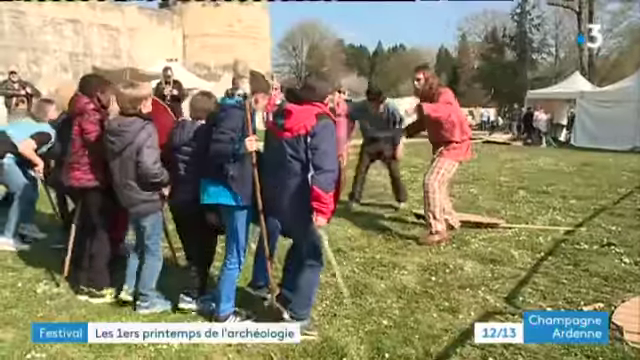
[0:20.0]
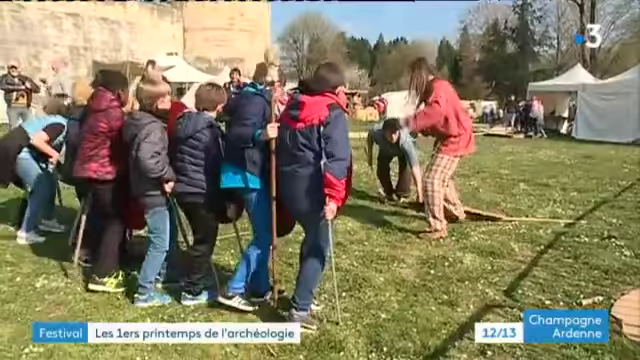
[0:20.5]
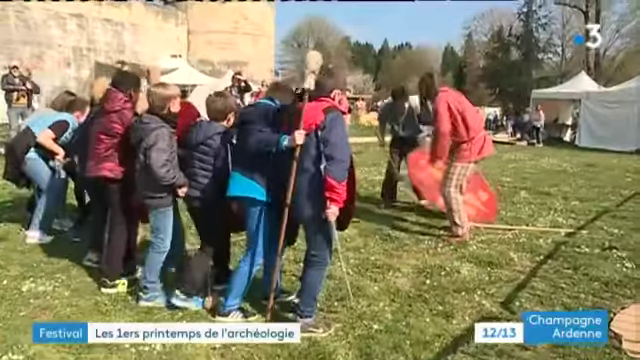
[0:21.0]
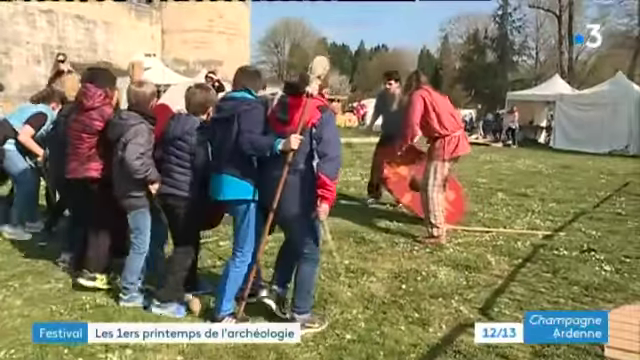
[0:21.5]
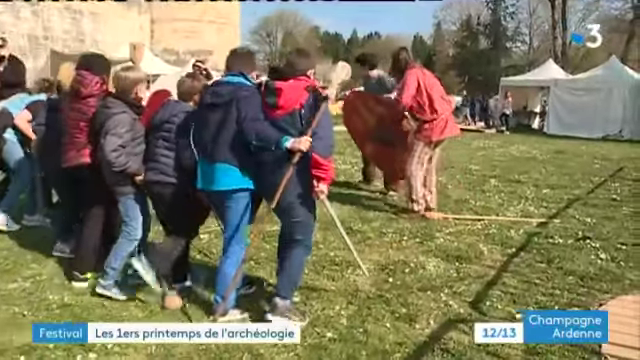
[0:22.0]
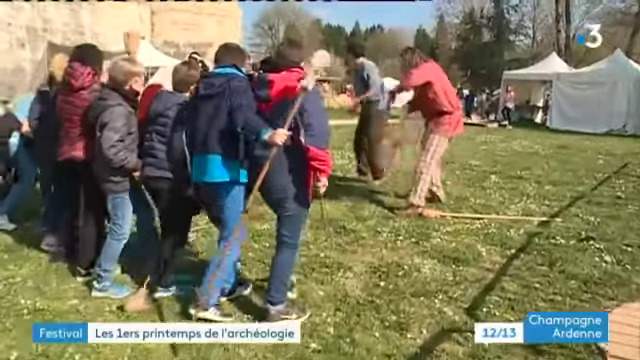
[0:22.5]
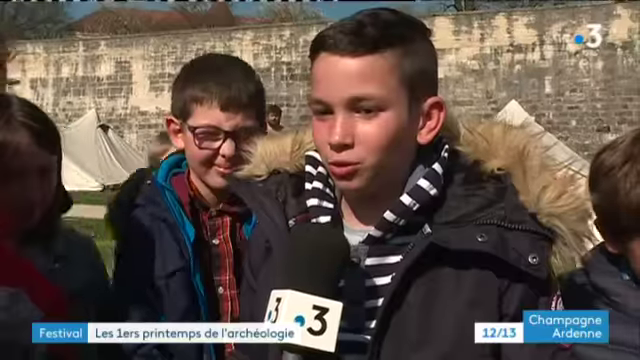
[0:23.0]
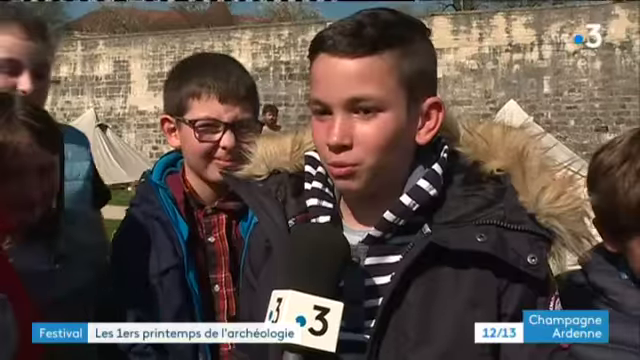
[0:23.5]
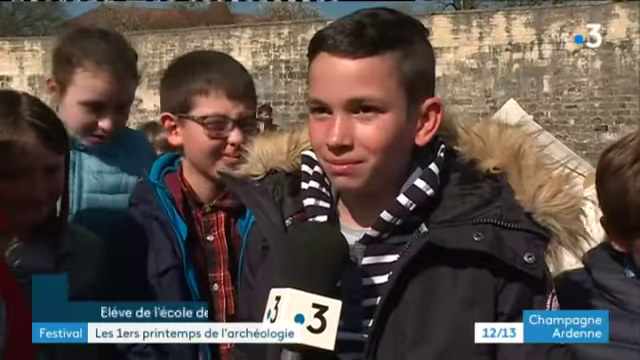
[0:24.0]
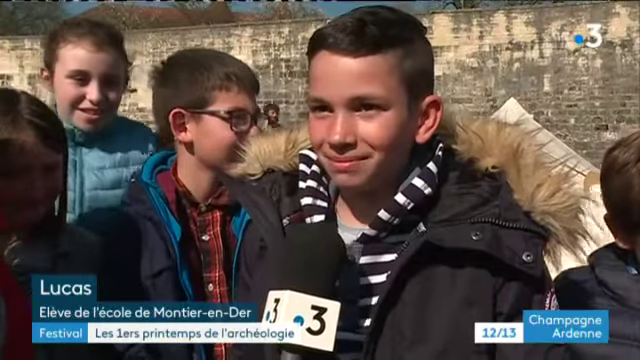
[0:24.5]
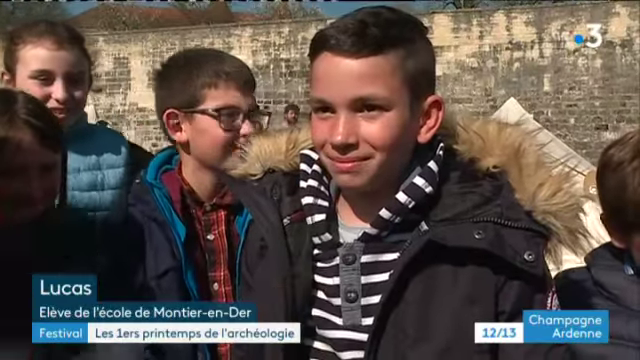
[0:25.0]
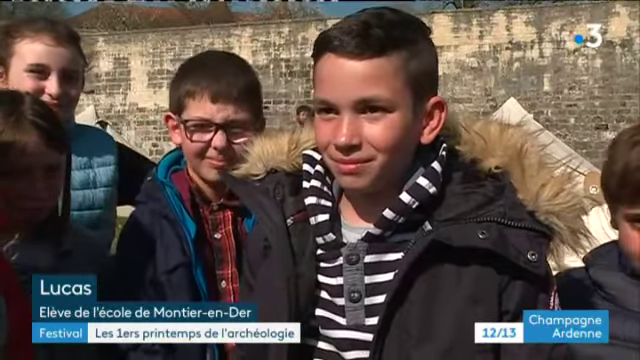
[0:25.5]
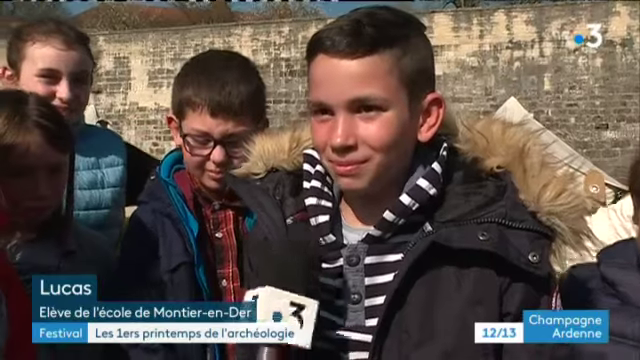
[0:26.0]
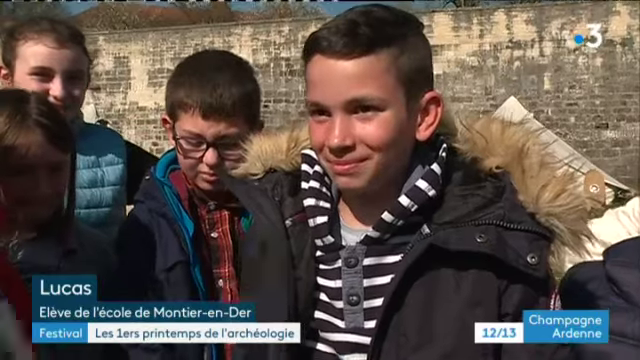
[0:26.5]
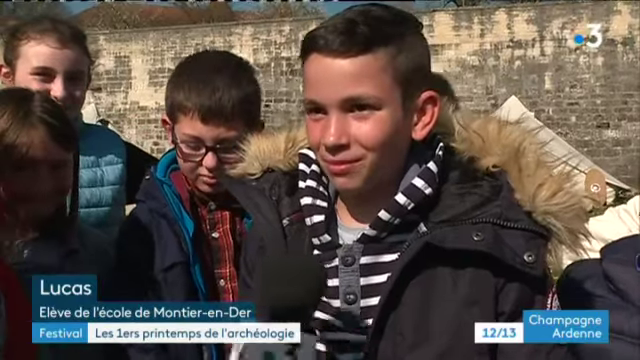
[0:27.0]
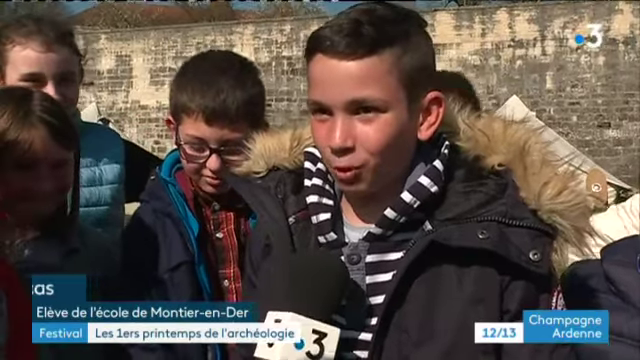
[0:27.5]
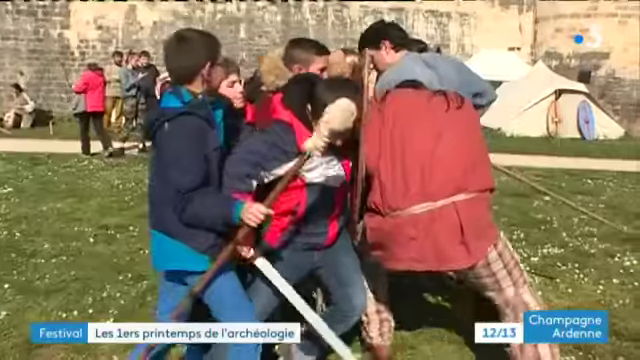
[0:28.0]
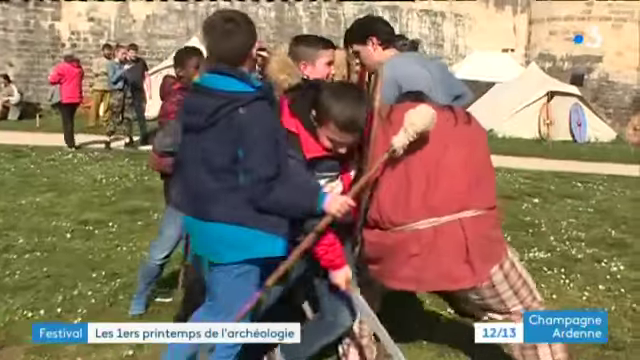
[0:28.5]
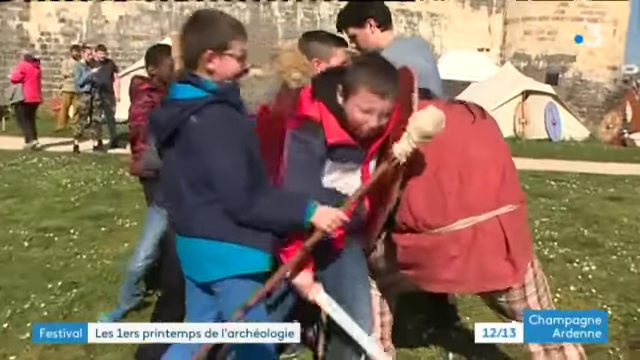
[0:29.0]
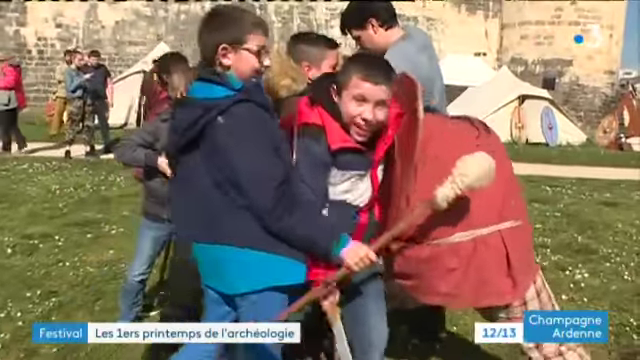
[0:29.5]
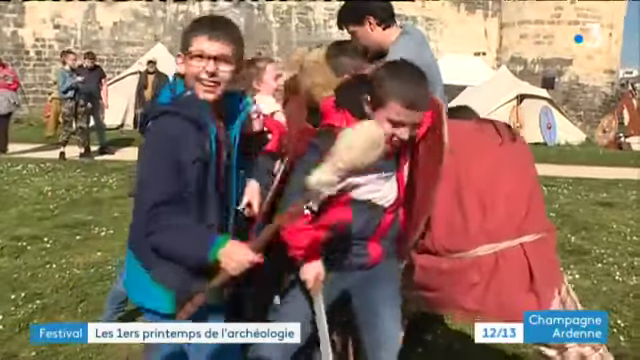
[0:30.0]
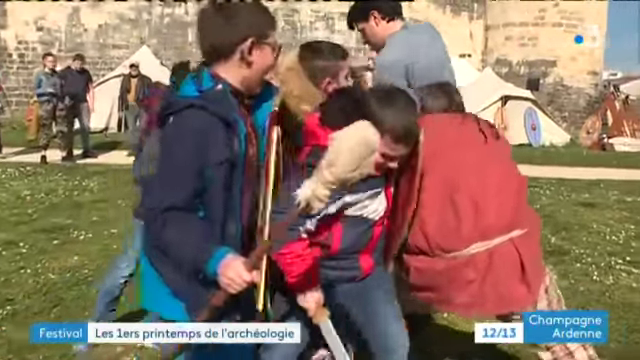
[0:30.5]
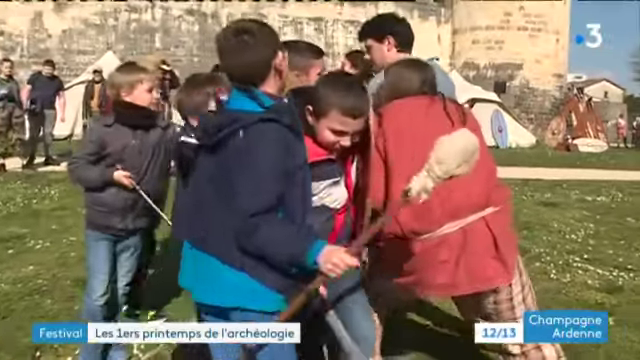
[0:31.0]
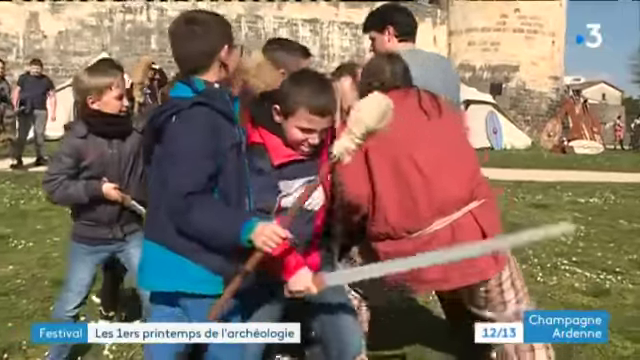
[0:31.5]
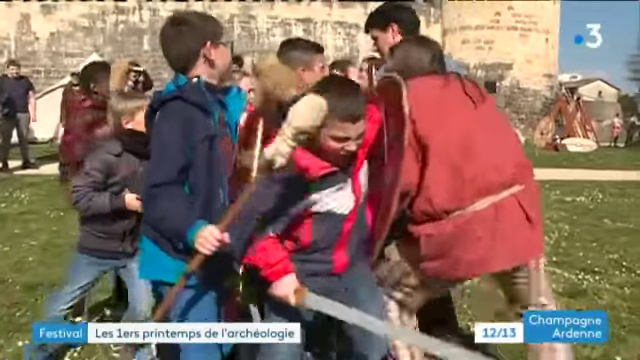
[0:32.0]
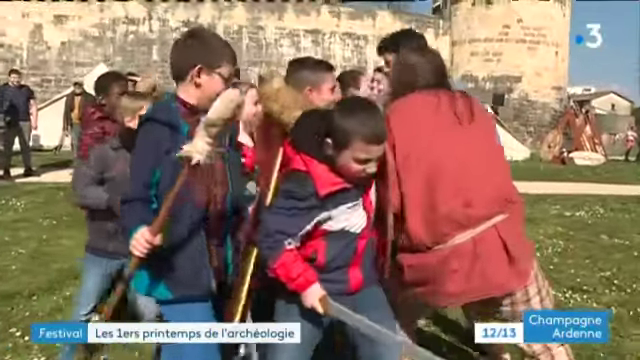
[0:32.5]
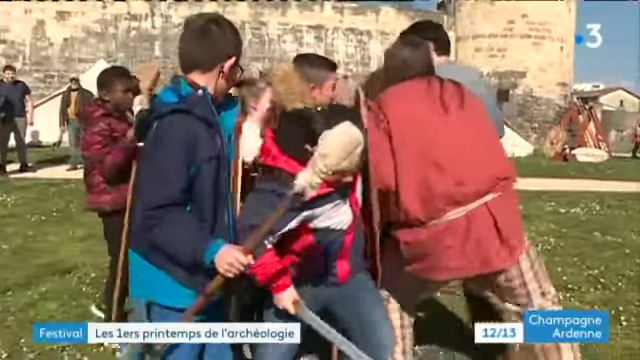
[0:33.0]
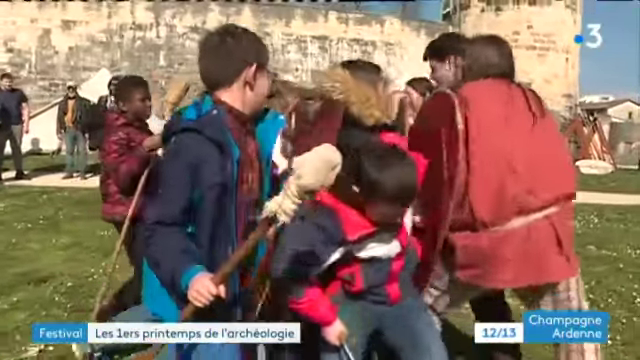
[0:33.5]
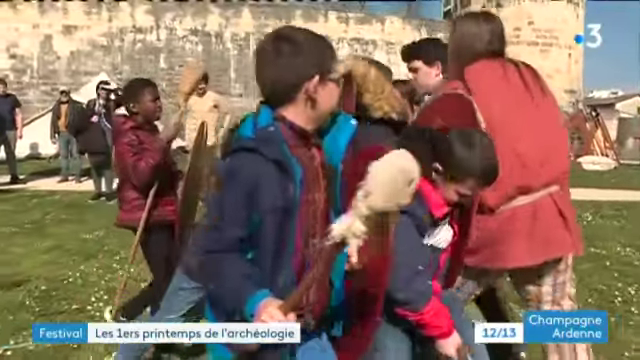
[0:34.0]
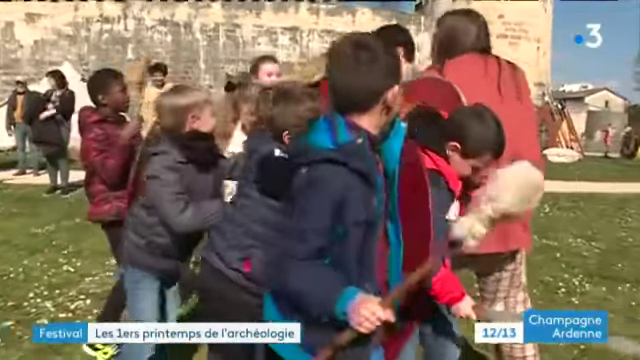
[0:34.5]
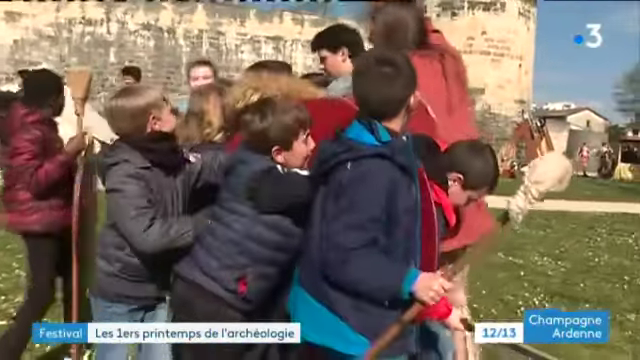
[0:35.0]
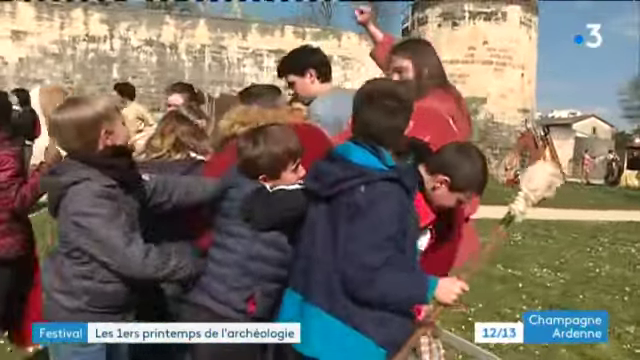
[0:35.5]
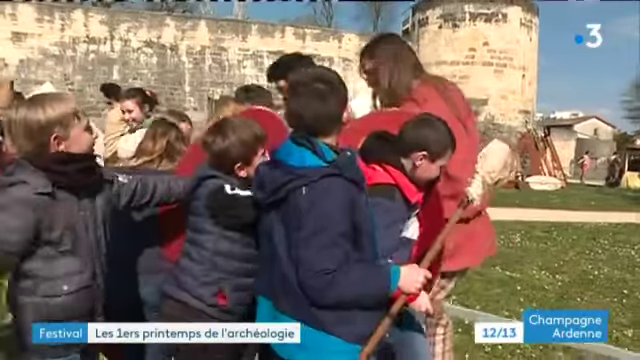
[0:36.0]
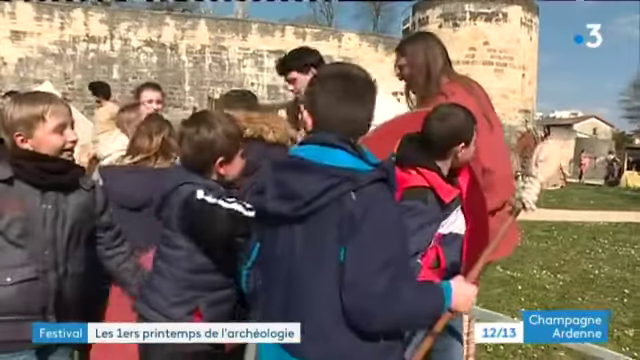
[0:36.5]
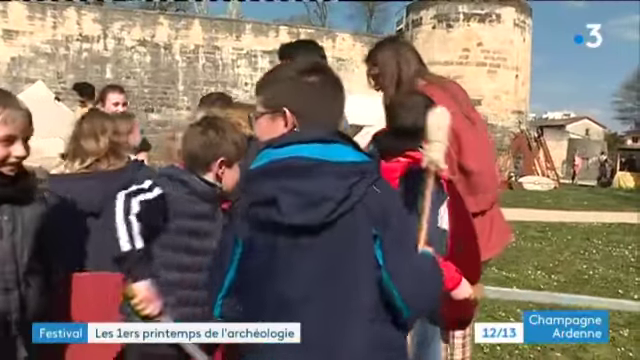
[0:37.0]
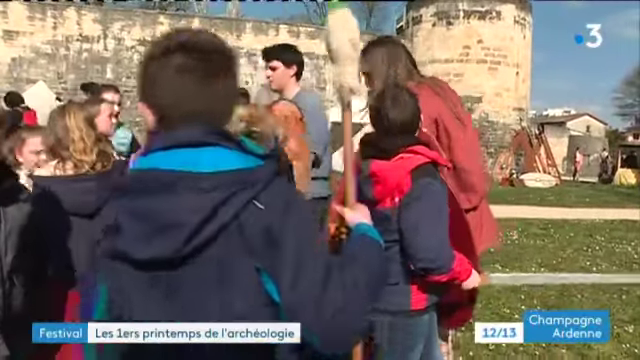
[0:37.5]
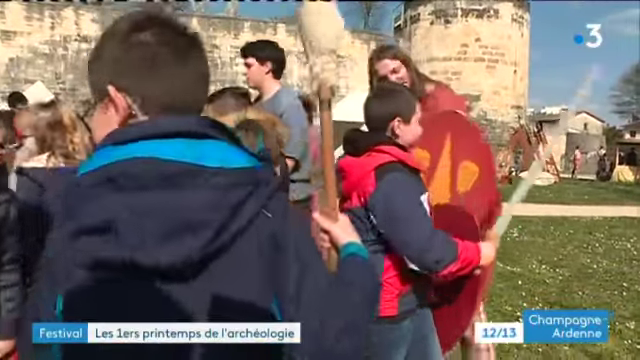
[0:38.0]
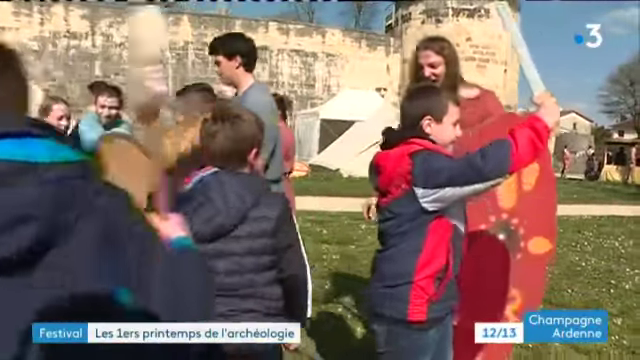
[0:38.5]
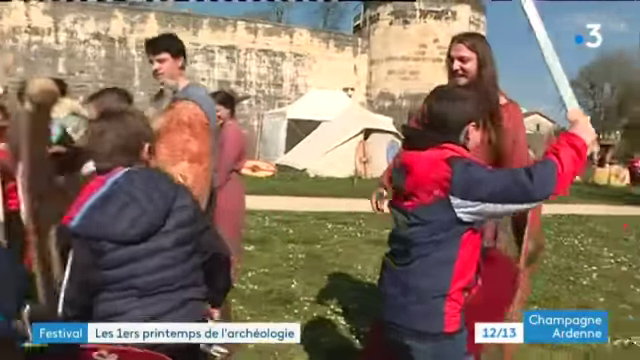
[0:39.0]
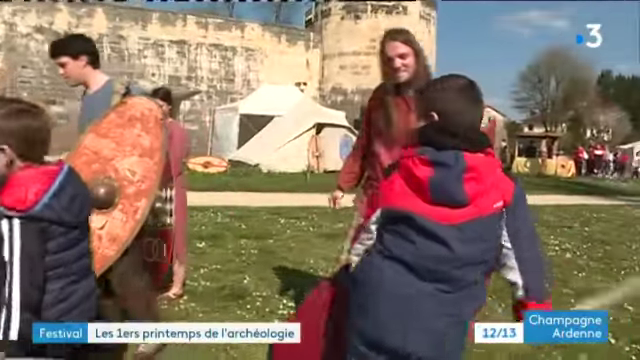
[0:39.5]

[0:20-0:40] The historical reenactment of a military engagement continues. On the left of the screen is part of a medieval castle with a round turret; on the right, in the background, are trees and a white marquee. In the foreground, the camera hovers behind a group of children dressed in jackets and holding spears and shields, showing the backs of their heads. In front of them, two men pretend to attack them with spears and large shields. The children stand in a row, and the row advances towards the two men, threatening them with spears. In the next shot, five children stand side by side in front of an old stone wall. One boy is at the front, wearing a black jacket with a fur hood and a black and white striped hoodie; he talks directly to a reporter behind the camera who holds a microphone with a number three. A blue box in the lower left corner gives the boy's name as Lucas, with some French text under it, and in the lower right corner a blue box with white writing says "Champagne Ardennes". In the next shot, a scrum of children attacks the two men with the large shields and spears; the children and men are jumbled together as they pretend to fight, with the old stone wall of a medieval castle in the background. The children gradually push the men backwards. At the end, everybody involved looks happy, and the men nod and smile as if to congratulate the children for successfully fighting them.